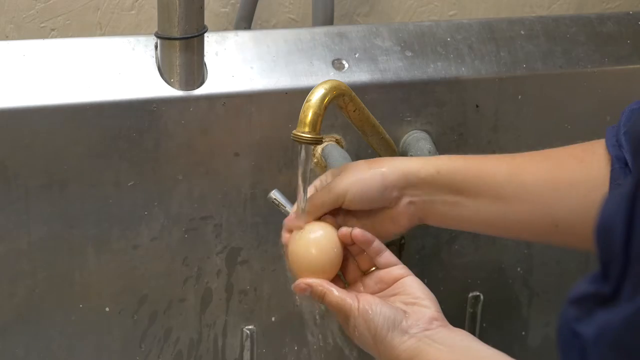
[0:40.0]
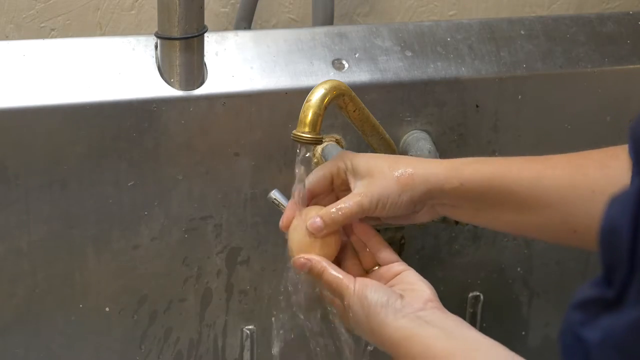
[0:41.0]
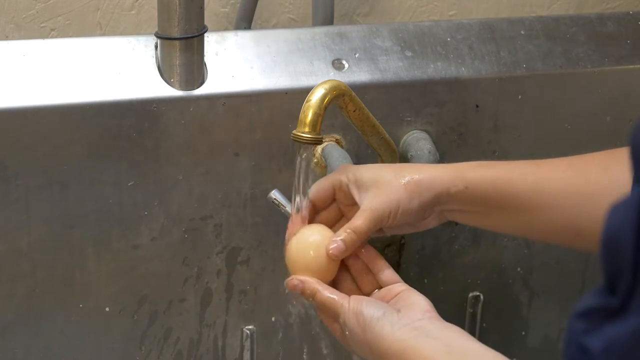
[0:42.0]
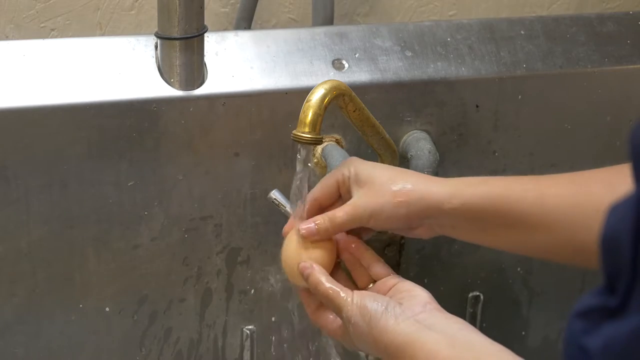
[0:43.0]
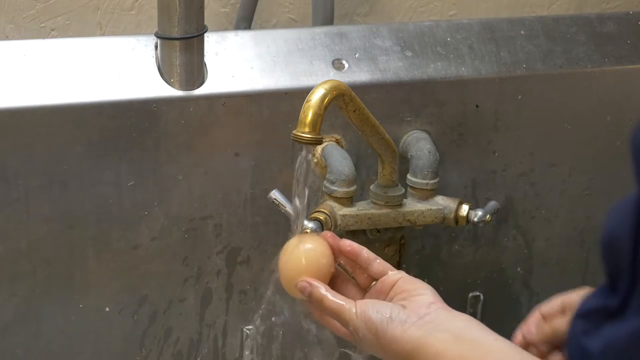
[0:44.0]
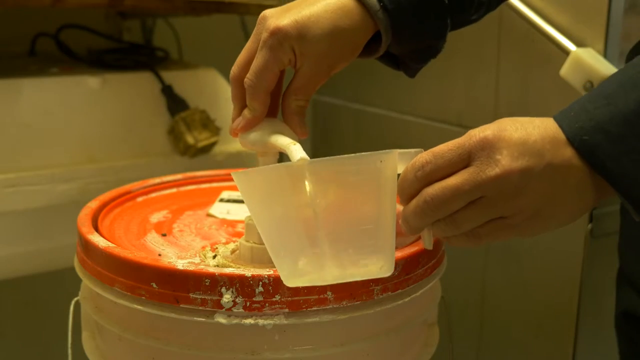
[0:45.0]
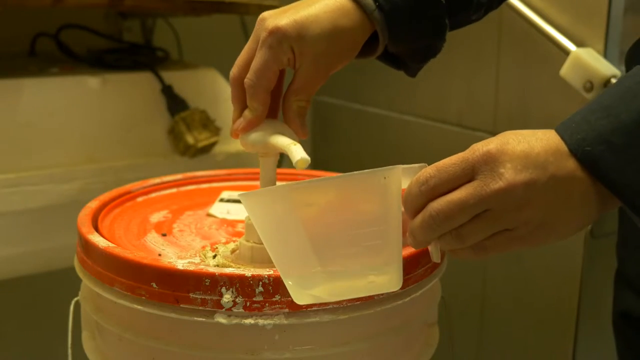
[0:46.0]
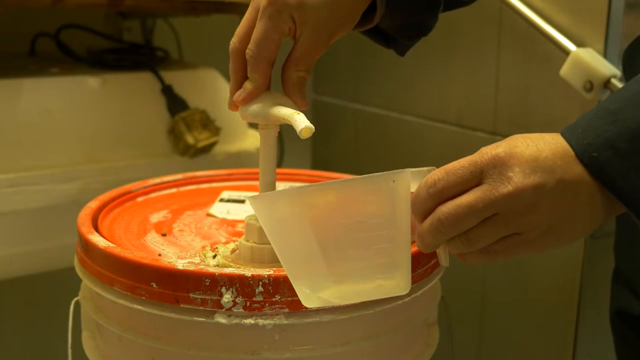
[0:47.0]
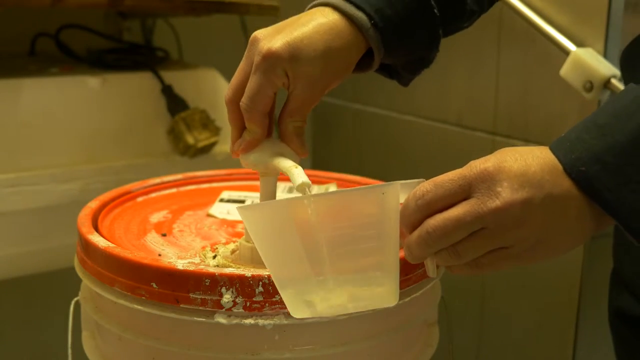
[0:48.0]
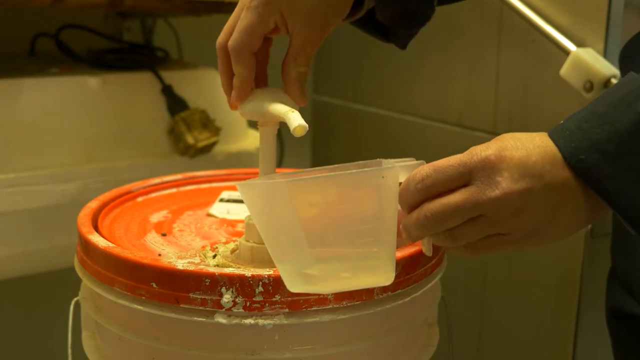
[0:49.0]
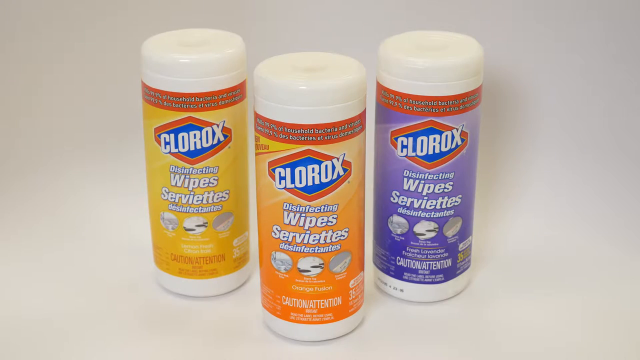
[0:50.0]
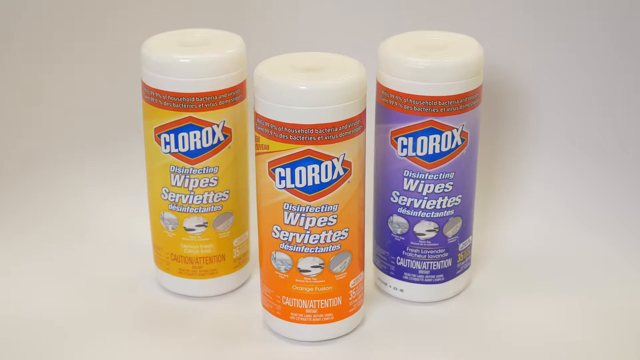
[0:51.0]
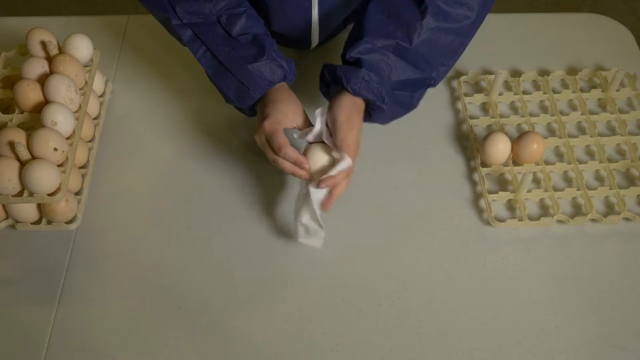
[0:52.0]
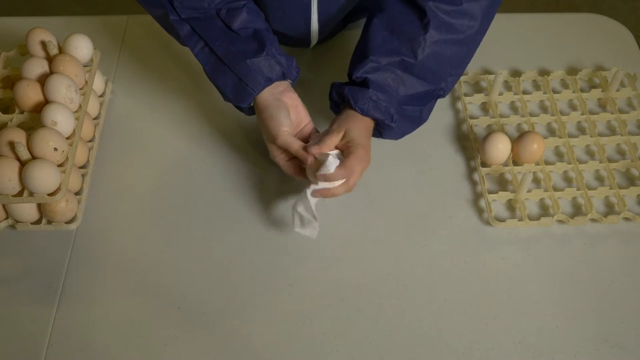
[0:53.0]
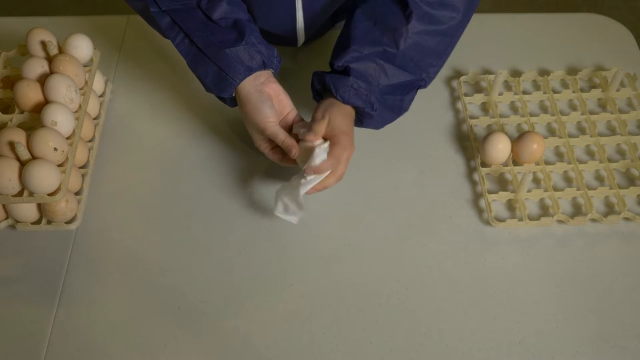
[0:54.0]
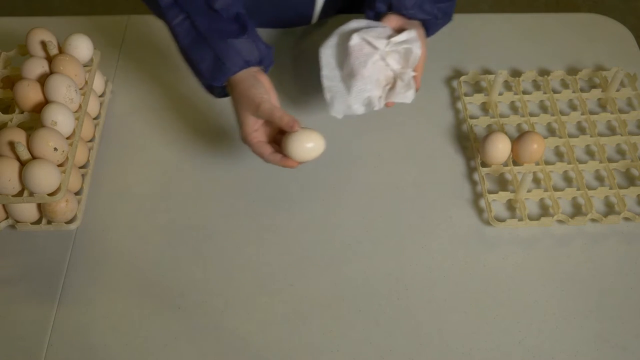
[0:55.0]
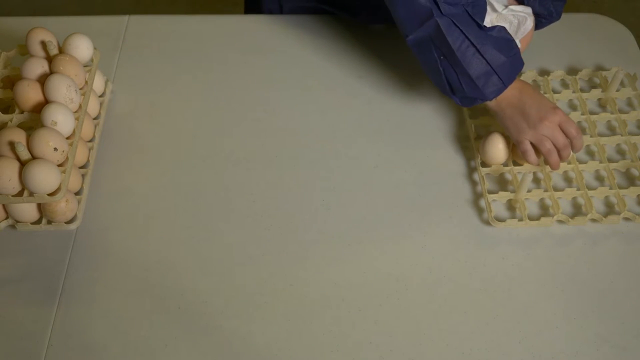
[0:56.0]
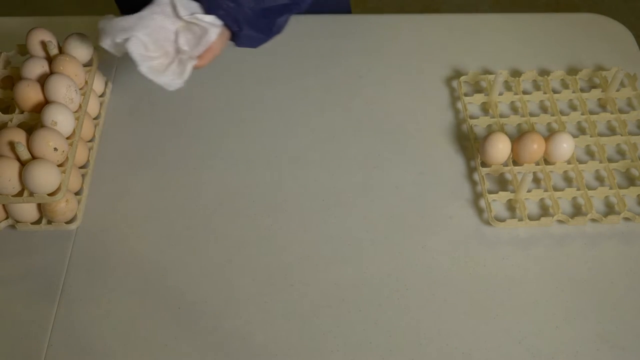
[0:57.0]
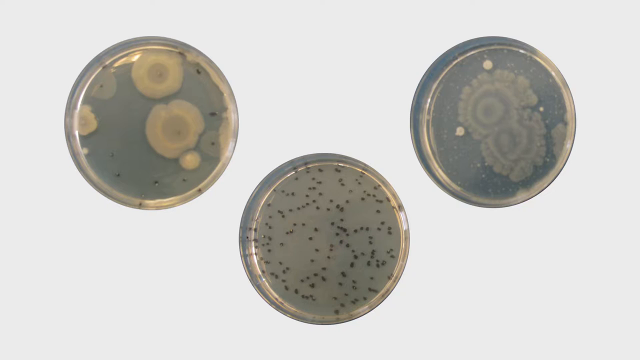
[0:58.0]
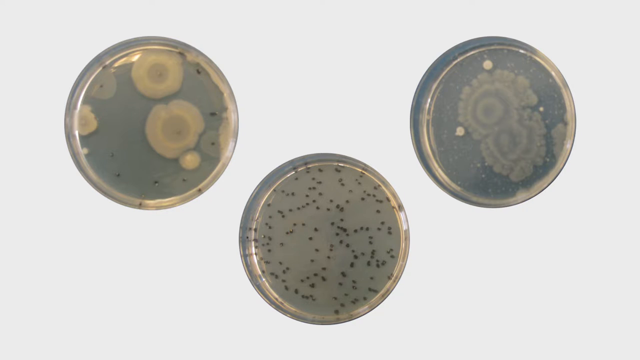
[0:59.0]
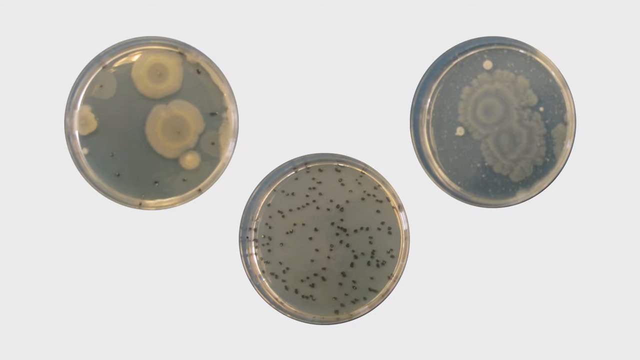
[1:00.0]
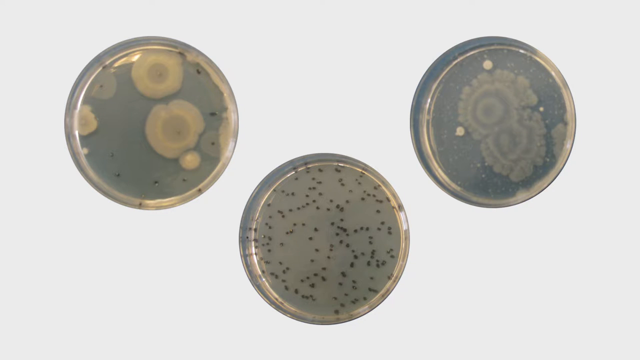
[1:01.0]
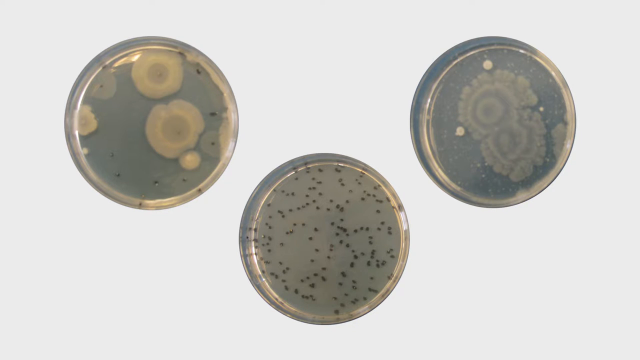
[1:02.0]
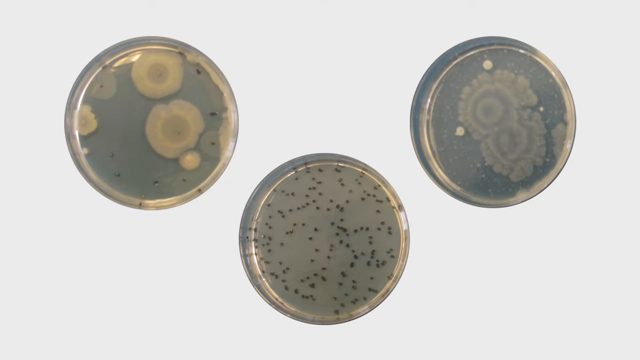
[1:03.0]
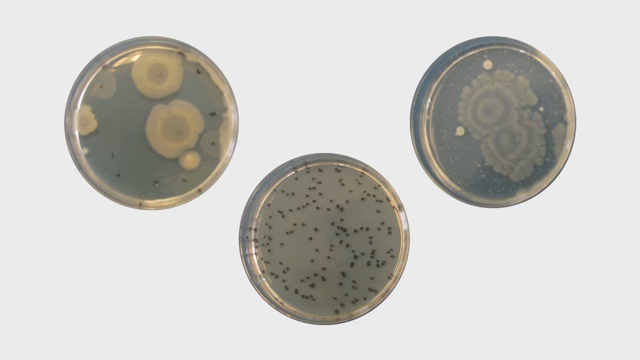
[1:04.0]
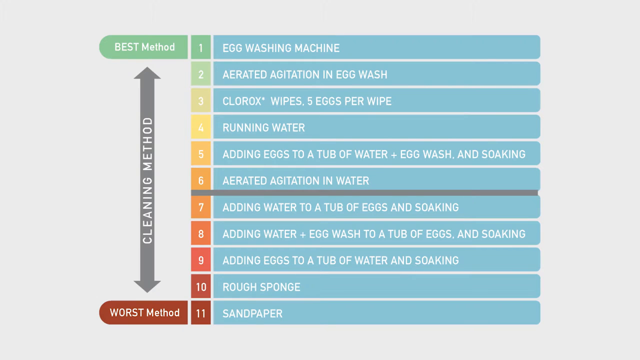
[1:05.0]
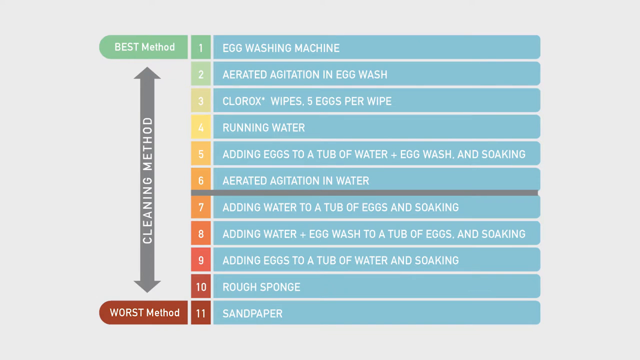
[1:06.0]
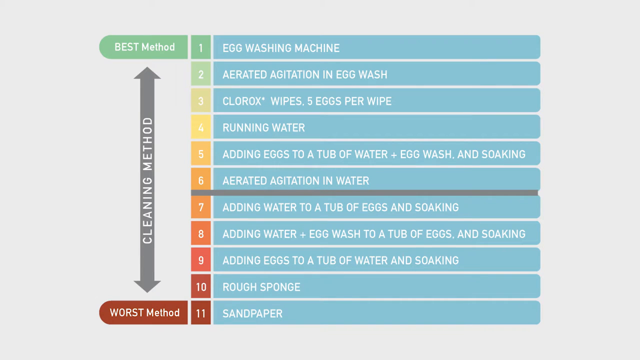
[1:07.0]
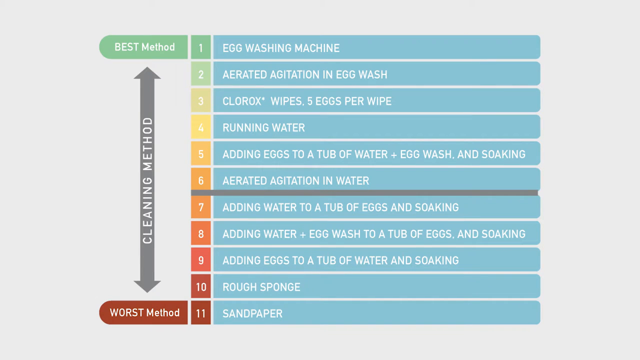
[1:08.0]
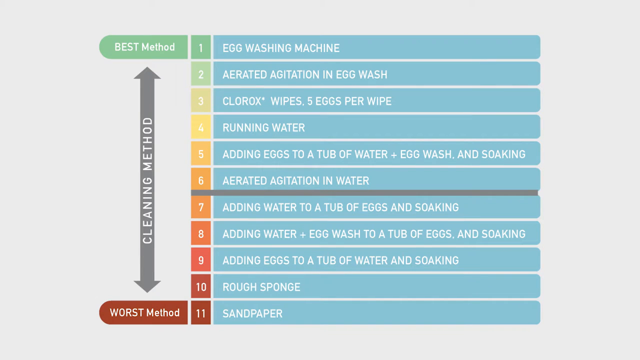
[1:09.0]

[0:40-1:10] A person in a blue top washes a light brown egg under a yellowish-gold tap at a silver sink, with gray piping visible. A clear plastic container is shown as someone pushes down on a white pump with an orange cap, in front of a light cream white wall. A white person's hand with gray sleeves fills up the small container. Against an off-white background are three white tubes of Clorox wipes. The one on the left is yellow with white "Clorox" lettering in a red and blue box and white lettering reading "Disinfecting Wipes"; the rest of its text is in French. The middle one is also "Disinfecting Wipes" with an orange panel, and the one on the right has a purple panel and is also Clorox disinfecting wipes. Lettering at the bottom includes "attention." Someone in a white coat, with white hands, holds a white piece of paper and wipes a light brown egg over a gray table. On the right are two brown eggs already on an off-white rack, and on the left are a whole bunch of light brown eggs on two separate racks, one on top of the other. The person uses the wet wipes to clean the eggs. Next, an off-white background shows three gray items that look like petri dishes. The one in the center has little brown dots in the middle, the top left one has a few brown dots and some off-white rounded pieces, and the one on the right has a gray rounded rigid edge piece in the middle. Then a chart on an off-white background shows a green box on the left with white lettering reading "best method," a green box with the number one, and gray boxes listing: "egg washing machine, aerated agitation and egg wash, Clorox wipes, five eggs per wipe, running water, adding eggs to a tub of water plus egg wash and soaking, aerated agitation and wash in water, adding water to a tub of eggs and soaking, adding water plus egg wash to a tub of eggs and soaking, adding eggs to a tub of water and soaking, rough sponge, sandpaper." The numbers run down from 1 to 11, and the colors go from green to yellow to orange to red. A gray arrow on the left says "cleaning method" in white, and at the bottom in red it says "worst method."